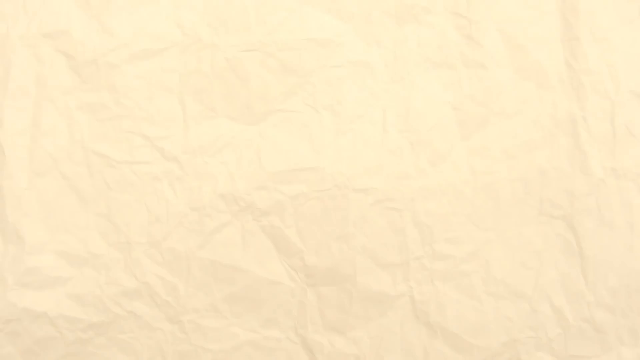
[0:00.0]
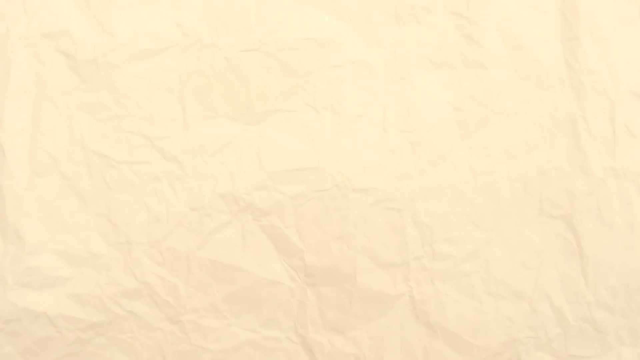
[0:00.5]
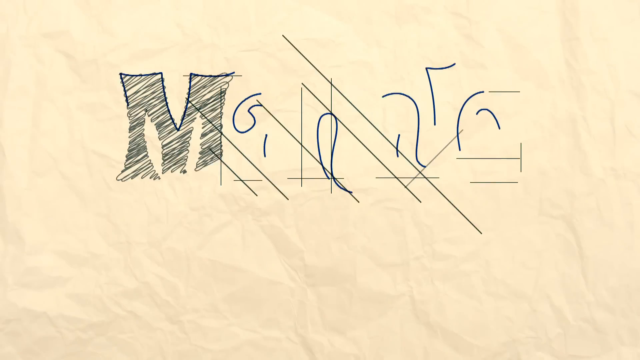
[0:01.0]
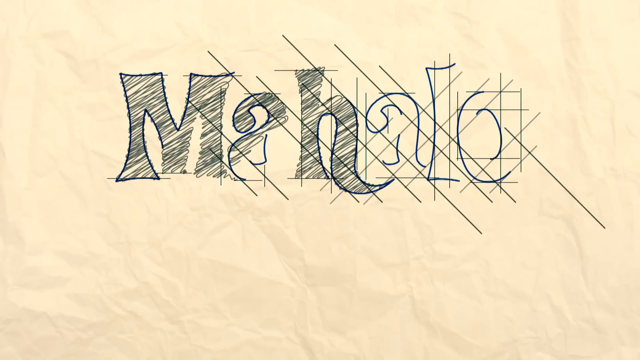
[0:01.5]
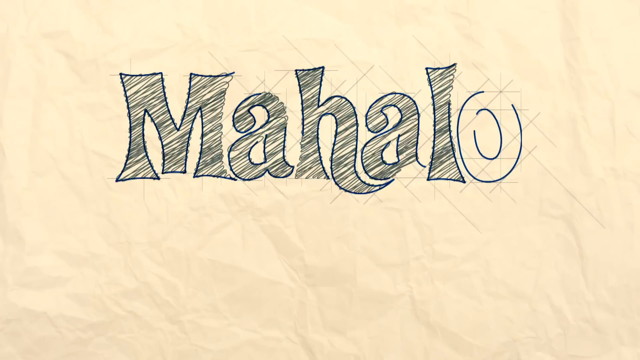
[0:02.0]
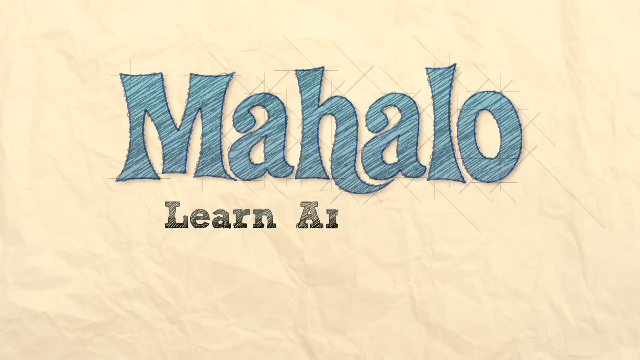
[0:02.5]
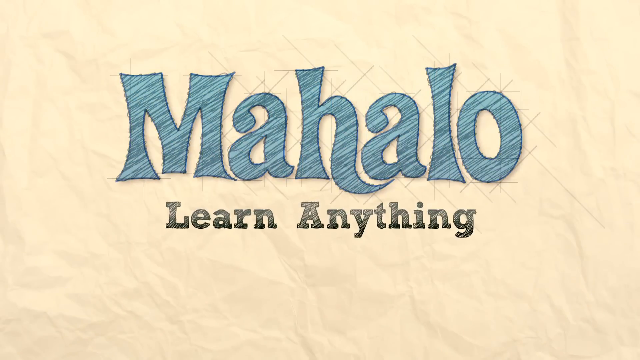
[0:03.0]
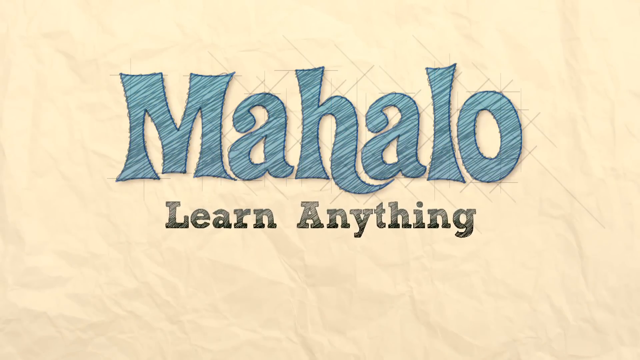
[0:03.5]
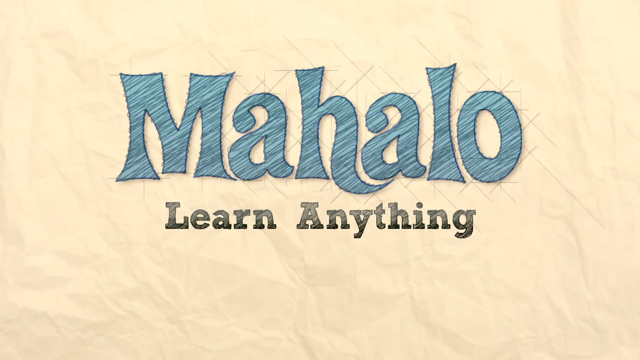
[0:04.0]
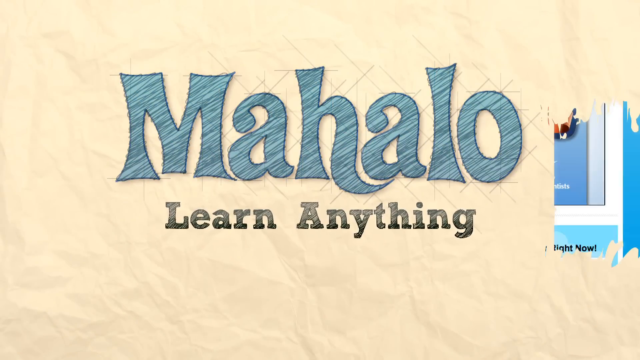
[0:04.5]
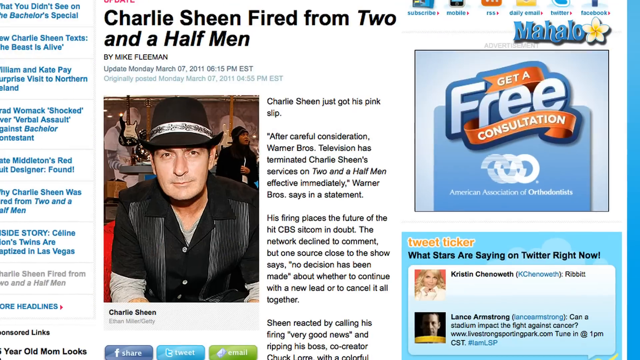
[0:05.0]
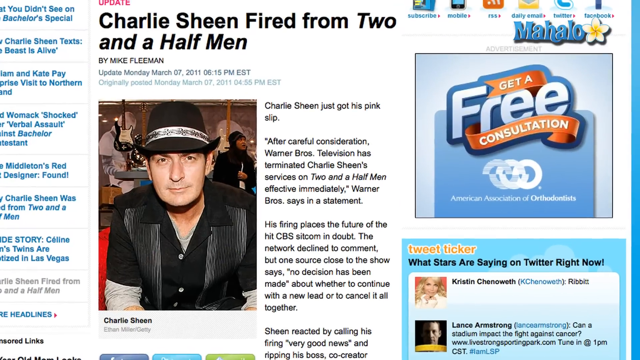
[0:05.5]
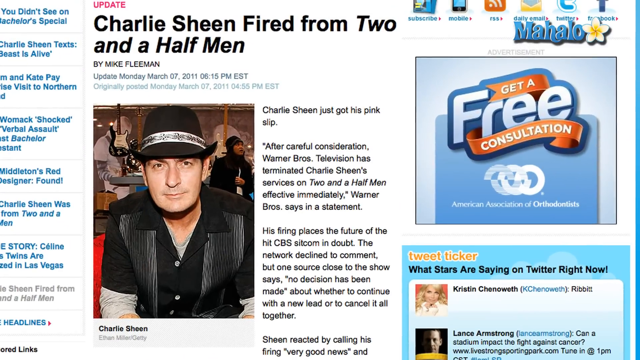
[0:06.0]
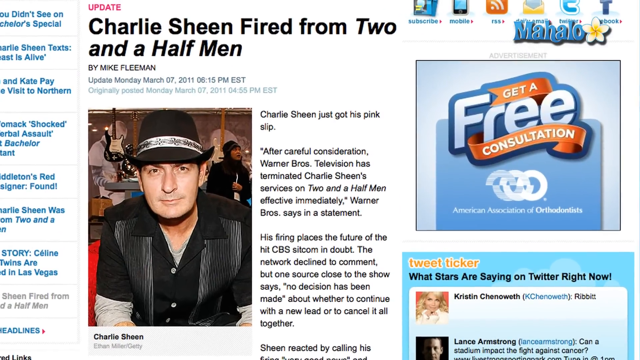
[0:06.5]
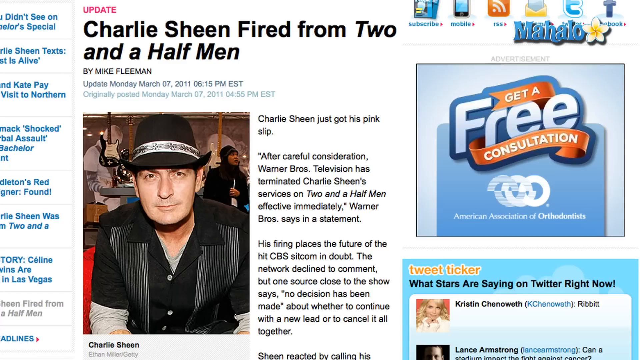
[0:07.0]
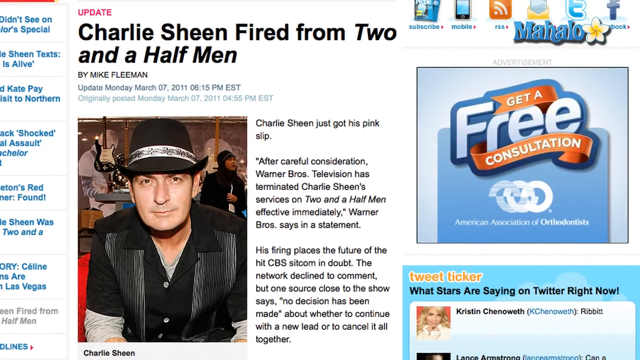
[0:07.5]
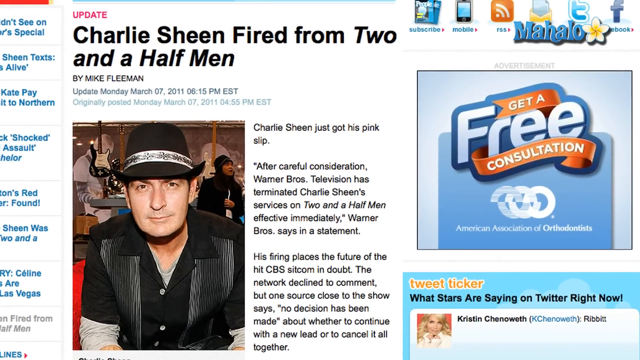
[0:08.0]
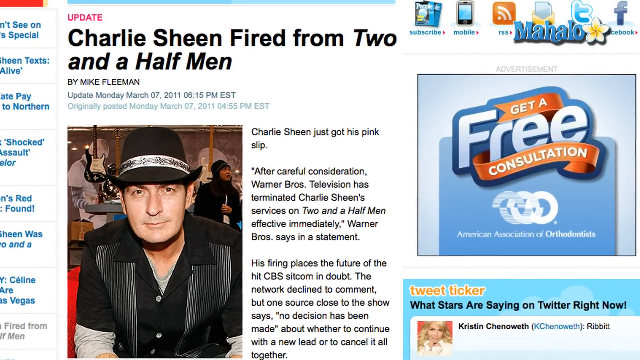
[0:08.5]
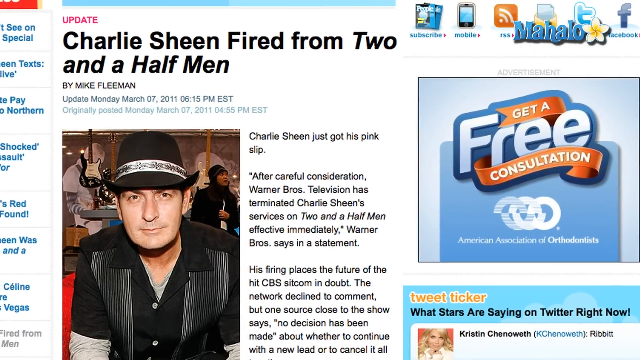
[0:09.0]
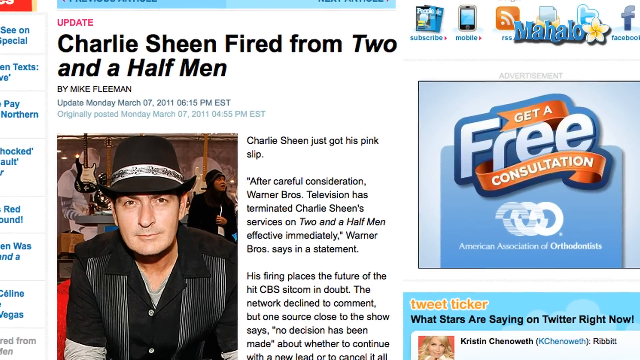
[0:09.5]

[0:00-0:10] The video is from Mahalo and concerns Charlie Sheen being fired from Two and a Half Men, in a piece by Mark Fleming.